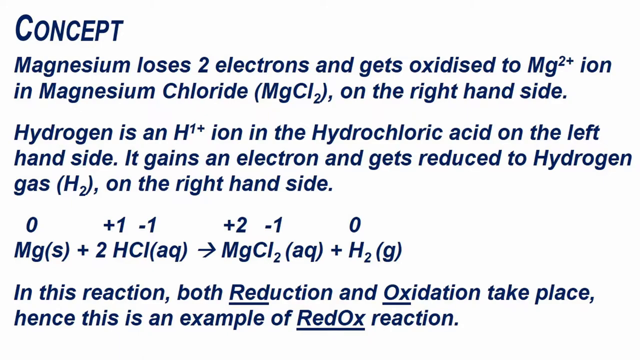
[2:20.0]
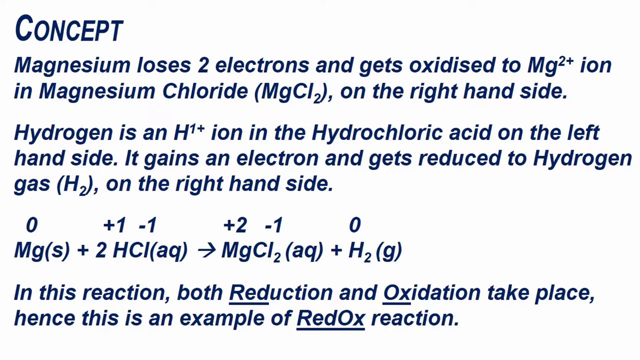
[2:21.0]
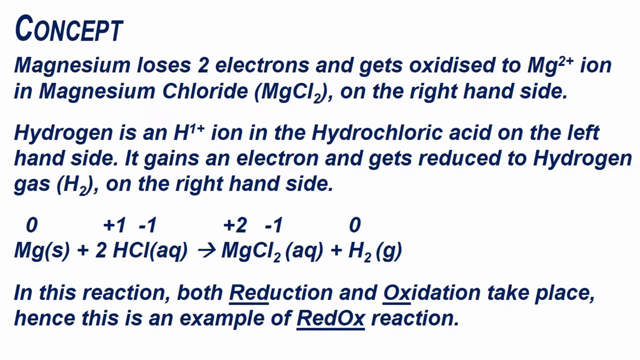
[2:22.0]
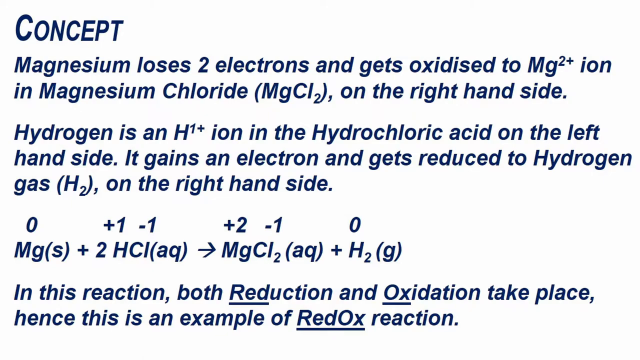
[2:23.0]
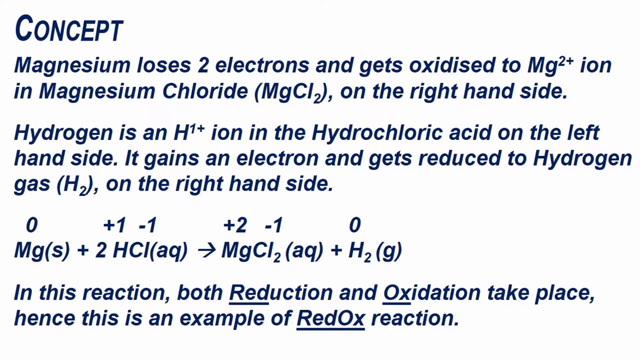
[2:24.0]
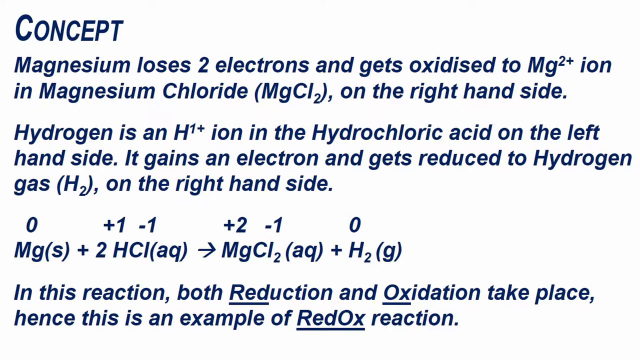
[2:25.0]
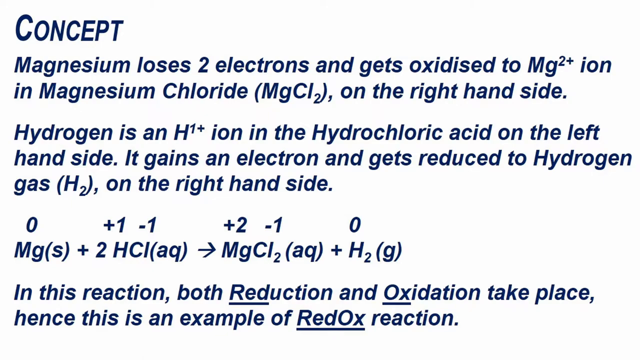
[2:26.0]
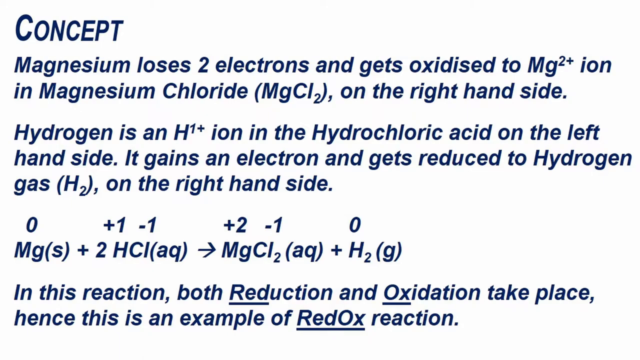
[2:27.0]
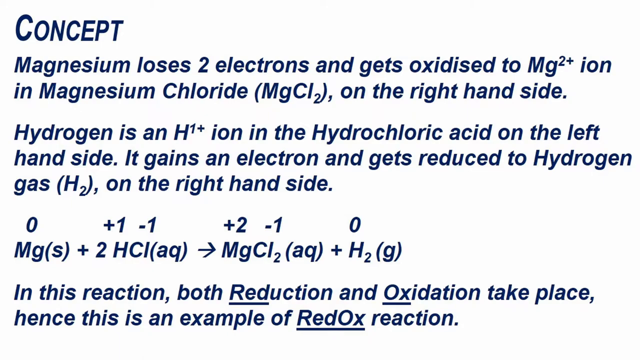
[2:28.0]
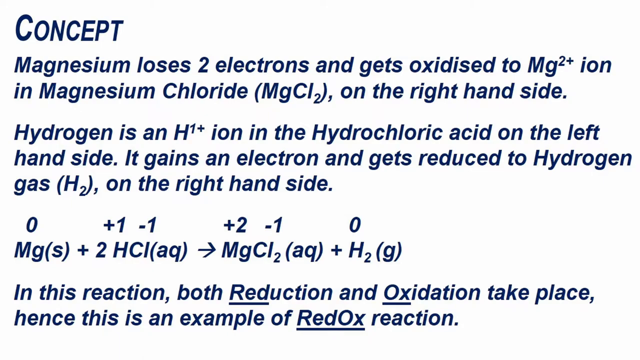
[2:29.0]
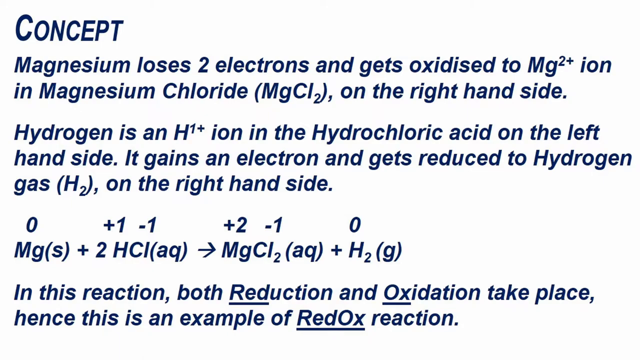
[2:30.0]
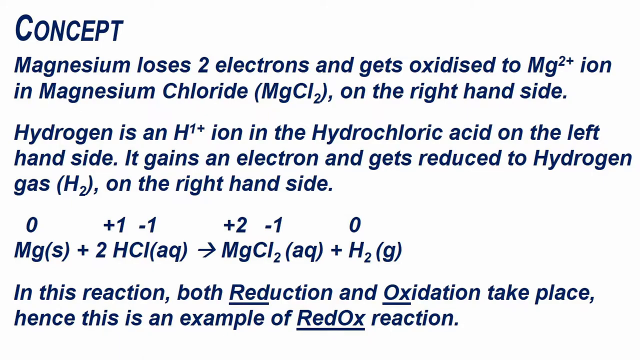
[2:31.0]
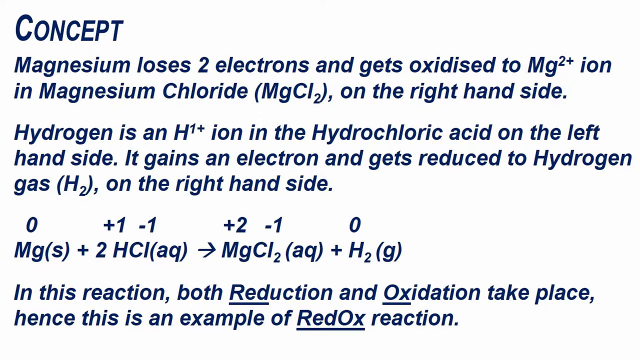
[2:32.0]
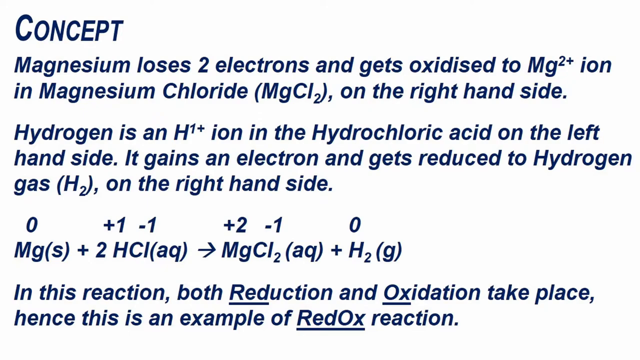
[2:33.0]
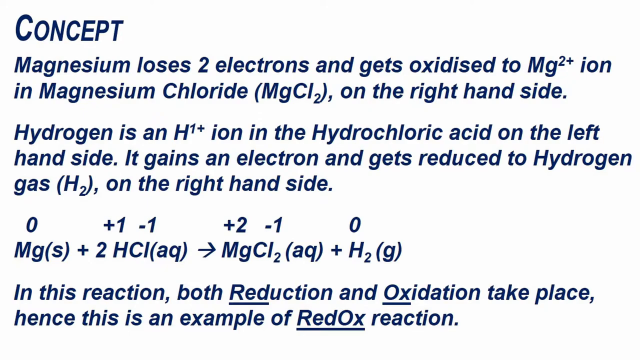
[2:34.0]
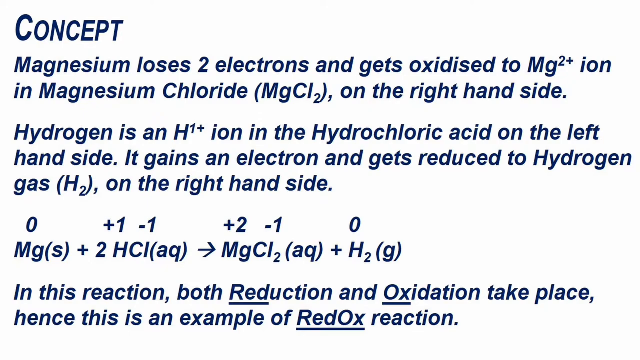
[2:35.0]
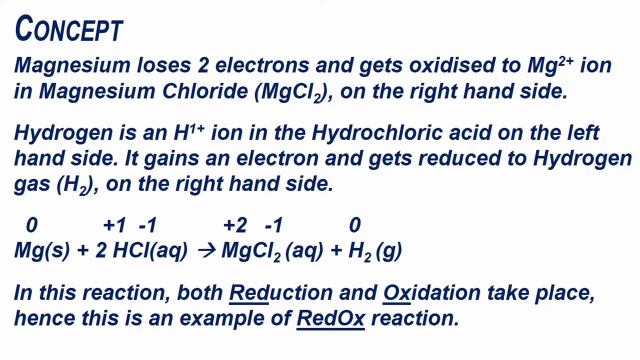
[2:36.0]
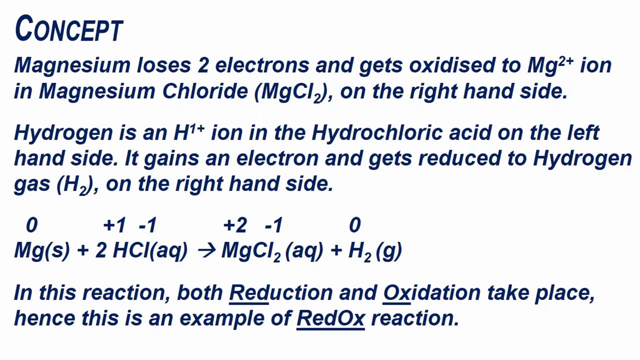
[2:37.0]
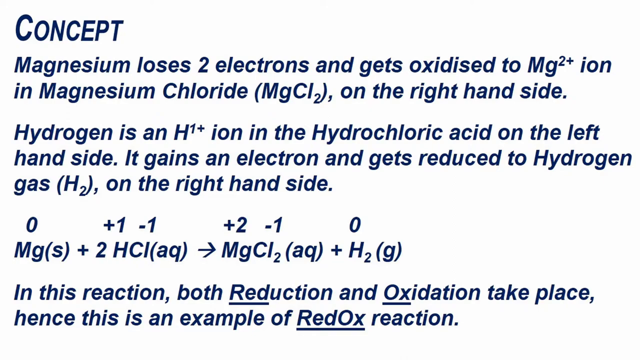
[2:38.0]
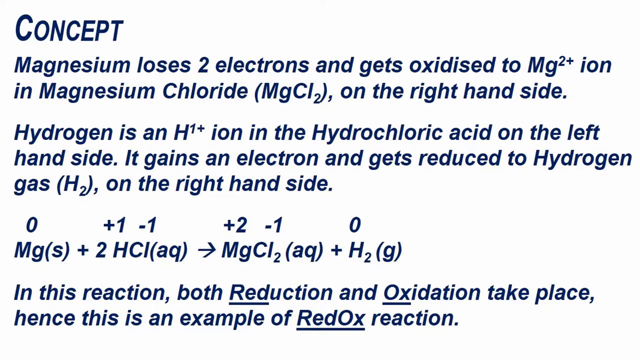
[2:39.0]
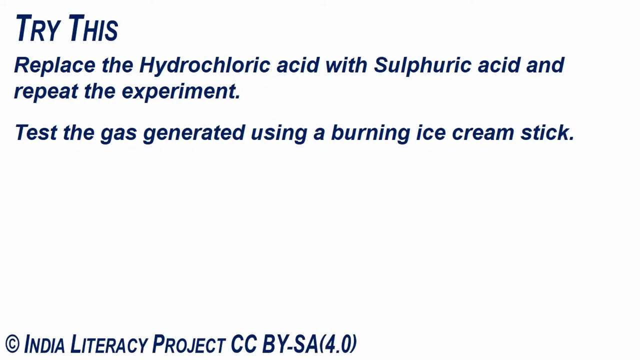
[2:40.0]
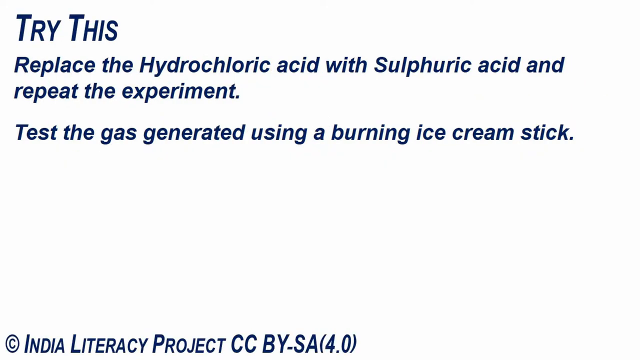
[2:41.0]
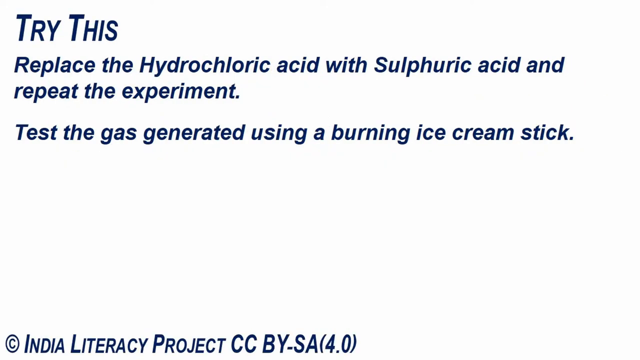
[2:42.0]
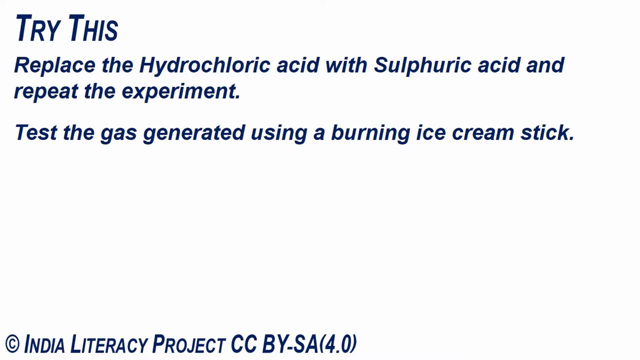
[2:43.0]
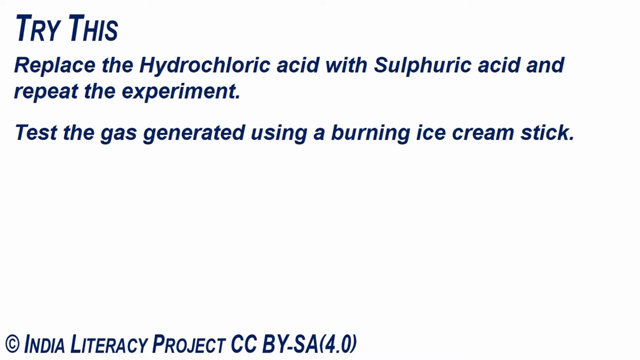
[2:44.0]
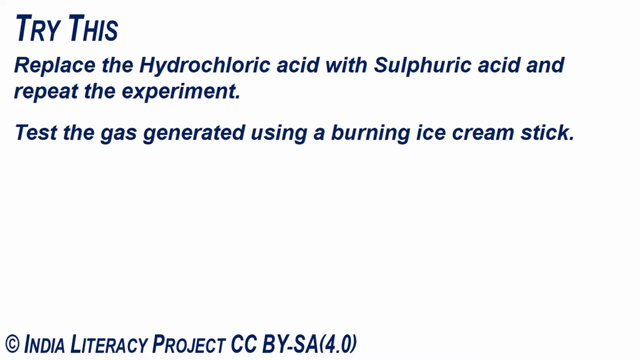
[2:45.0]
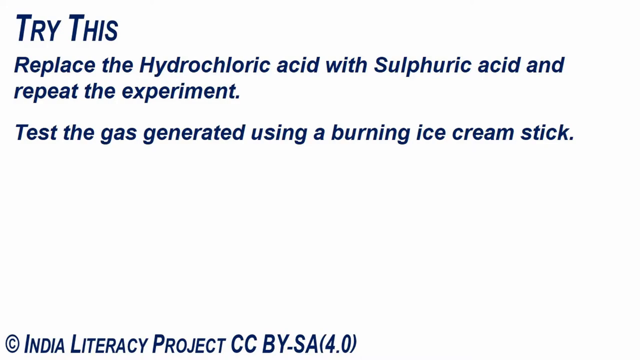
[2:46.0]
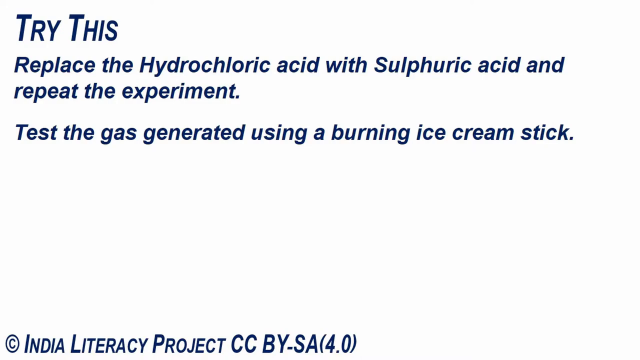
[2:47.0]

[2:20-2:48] A white background with blue text explains a concept involving magnesium chloride and hydrochloric acid, including its chemical composition, and at the bottom states "in this reaction, both reduction and oxidation take place. Hence, this is an example of redox reaction." Chemical equations are shown; the first includes a right-facing arrow and MgCl2. The video transitions to a new screen with a white background and blue text reading "try this. Replace the hydrochloric acid with sulfuric acid and repeat the experiment. Test the gas generated using a burning ice cream stick."